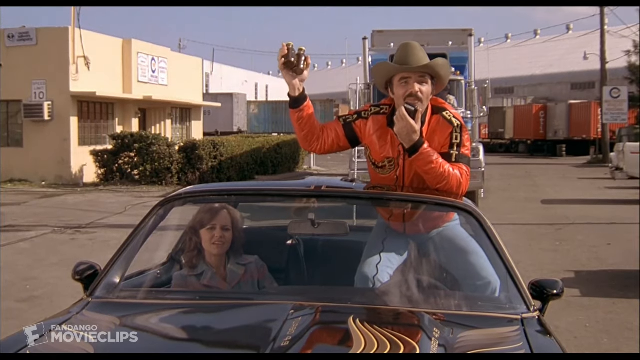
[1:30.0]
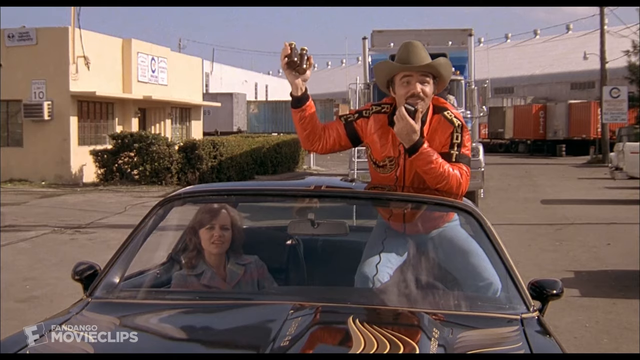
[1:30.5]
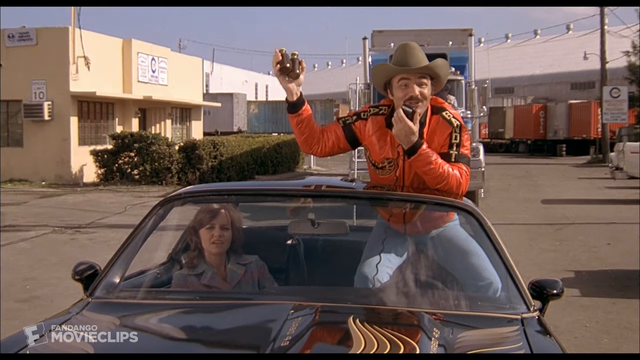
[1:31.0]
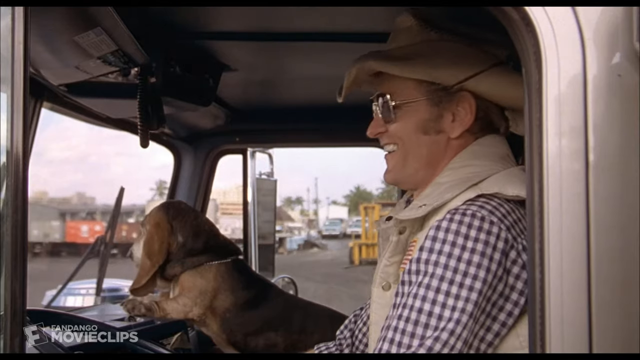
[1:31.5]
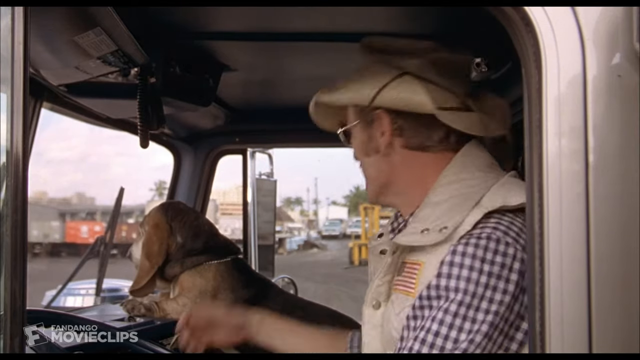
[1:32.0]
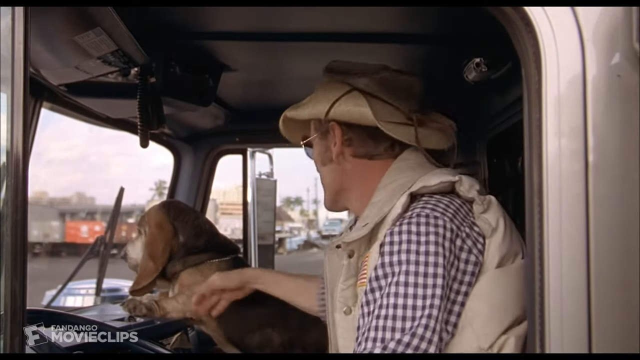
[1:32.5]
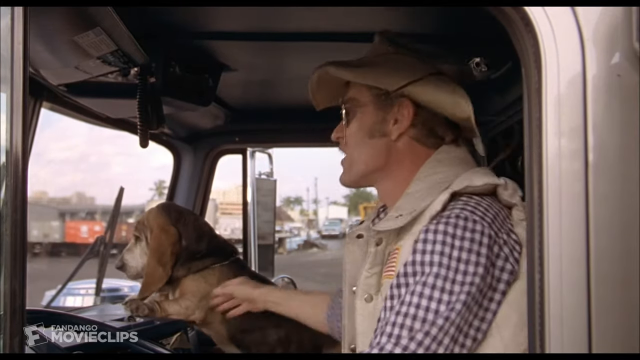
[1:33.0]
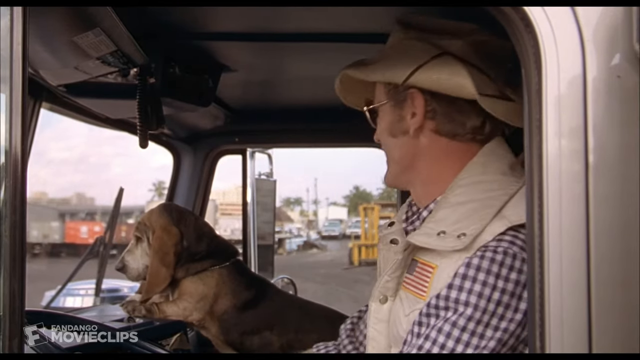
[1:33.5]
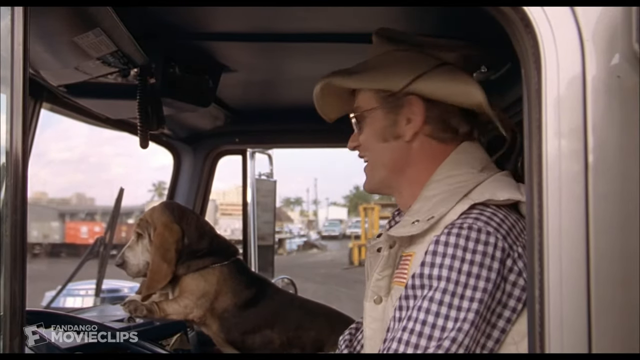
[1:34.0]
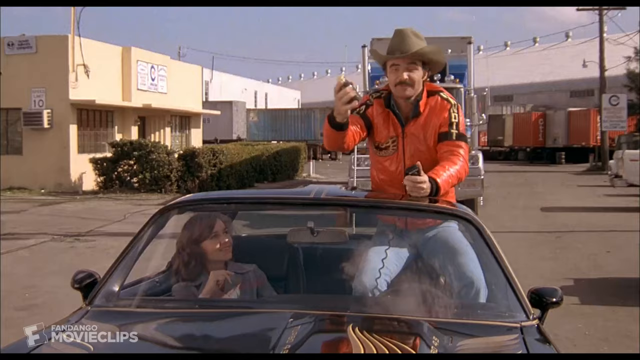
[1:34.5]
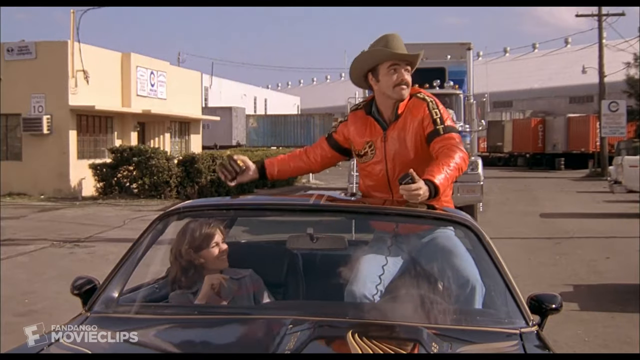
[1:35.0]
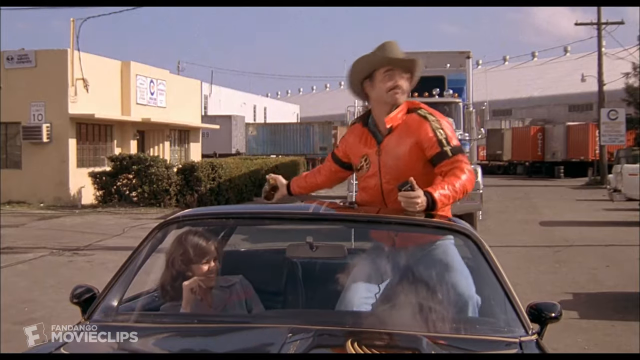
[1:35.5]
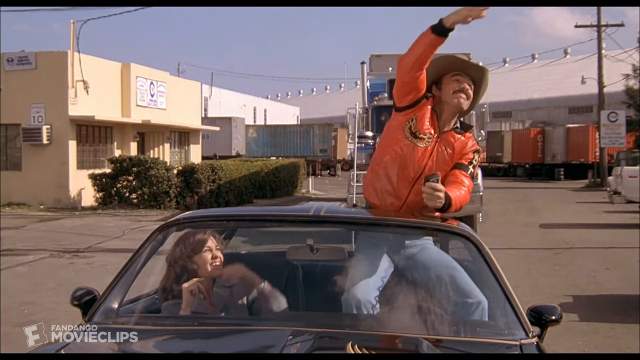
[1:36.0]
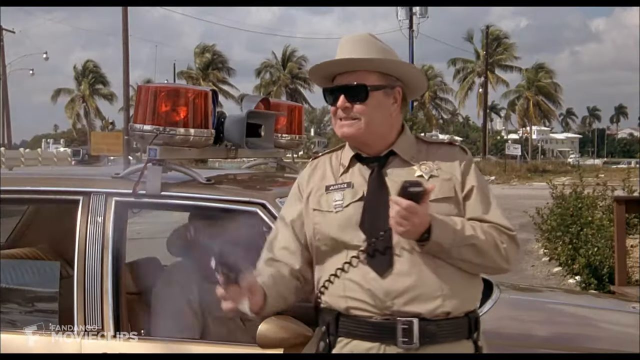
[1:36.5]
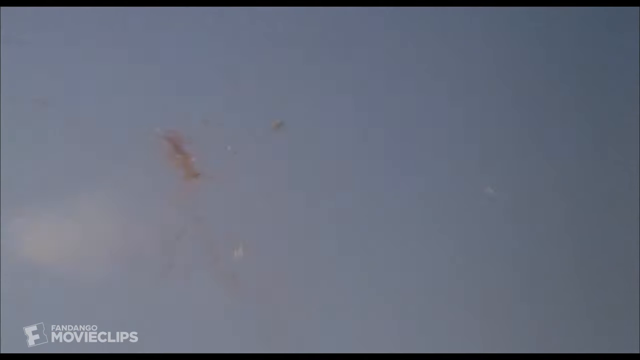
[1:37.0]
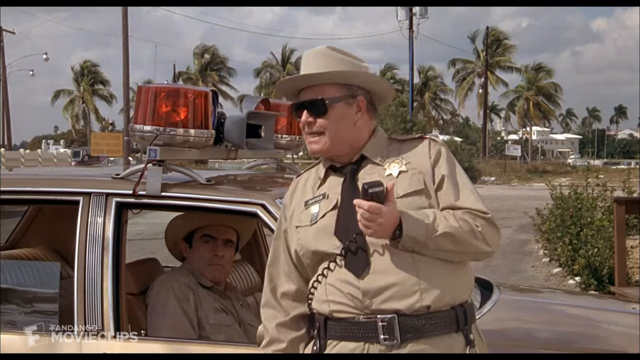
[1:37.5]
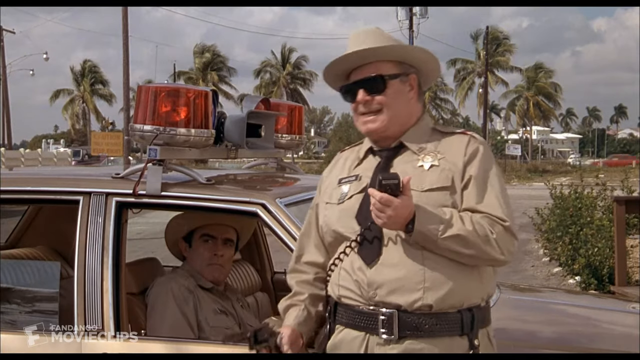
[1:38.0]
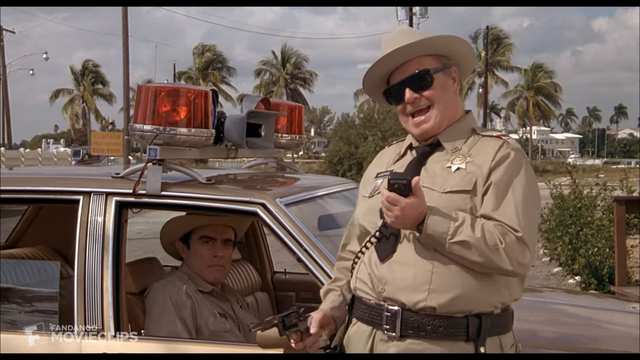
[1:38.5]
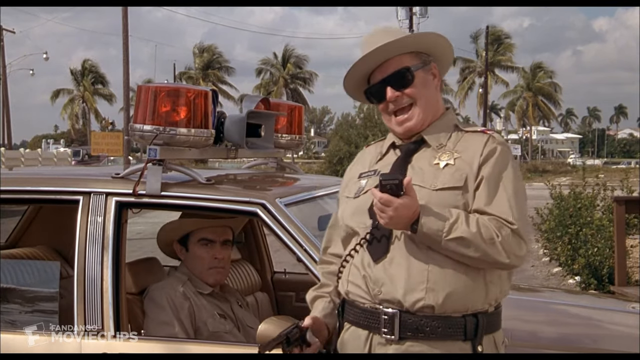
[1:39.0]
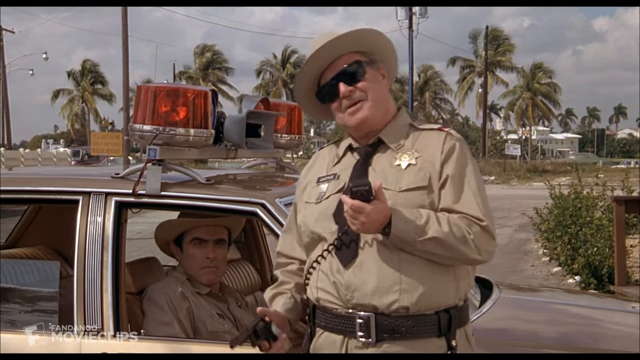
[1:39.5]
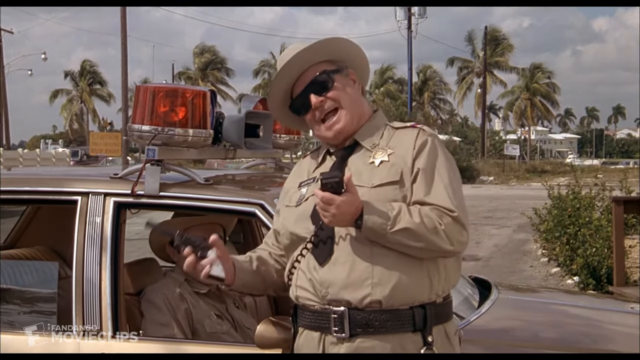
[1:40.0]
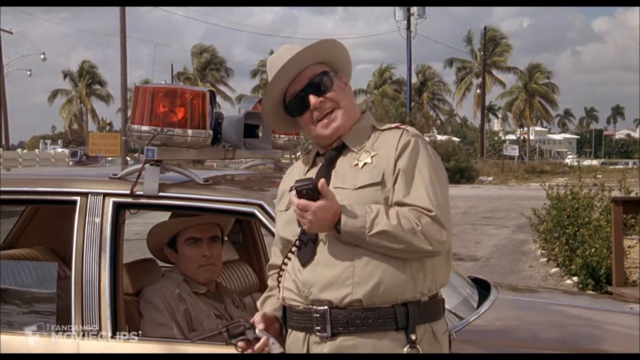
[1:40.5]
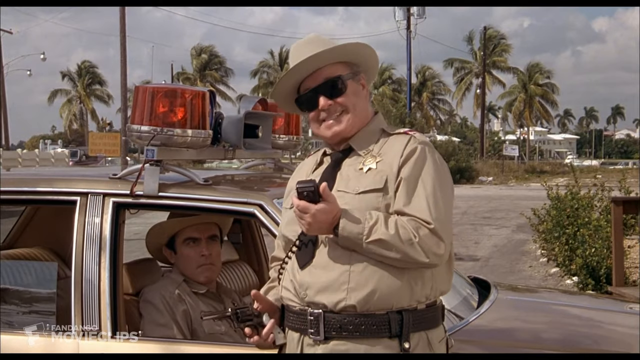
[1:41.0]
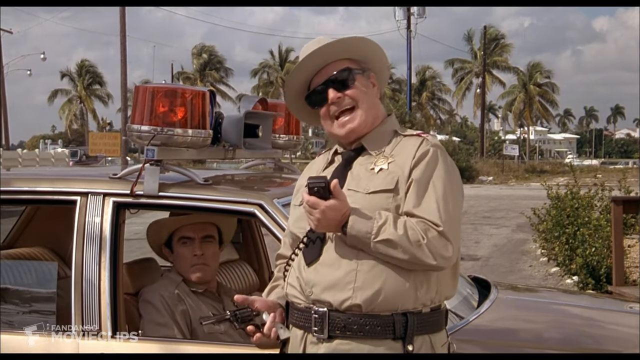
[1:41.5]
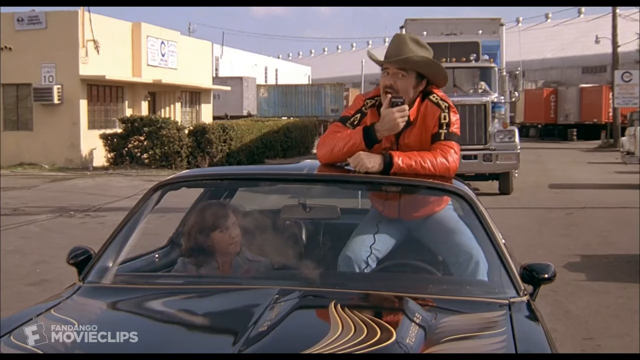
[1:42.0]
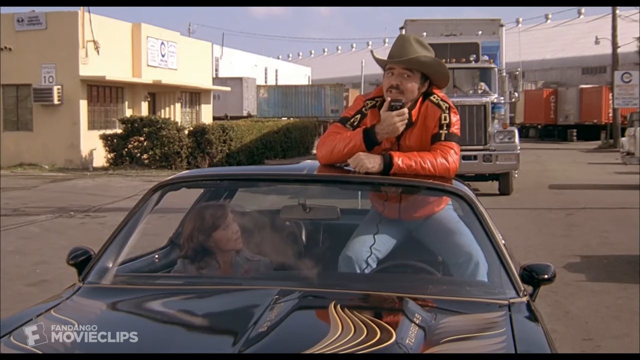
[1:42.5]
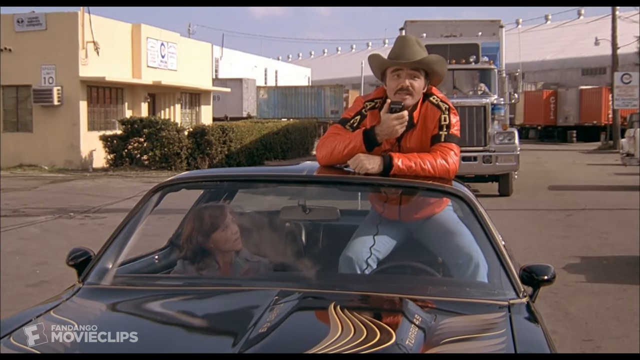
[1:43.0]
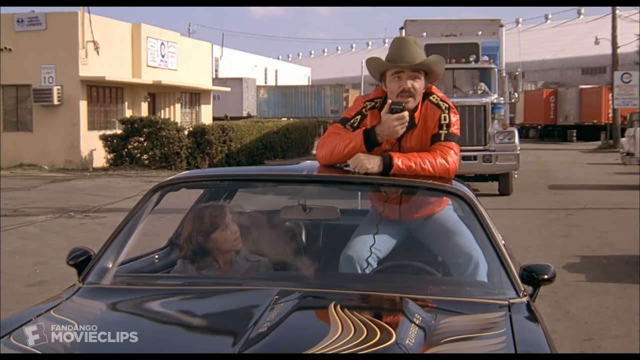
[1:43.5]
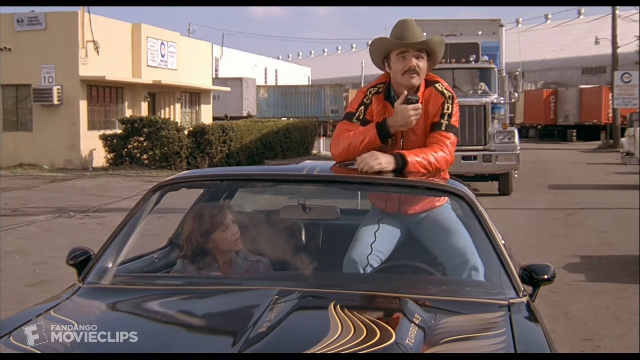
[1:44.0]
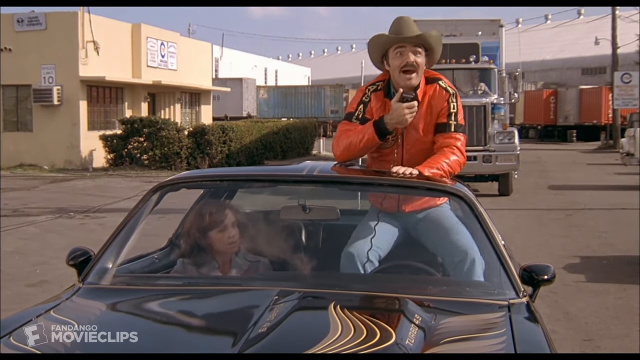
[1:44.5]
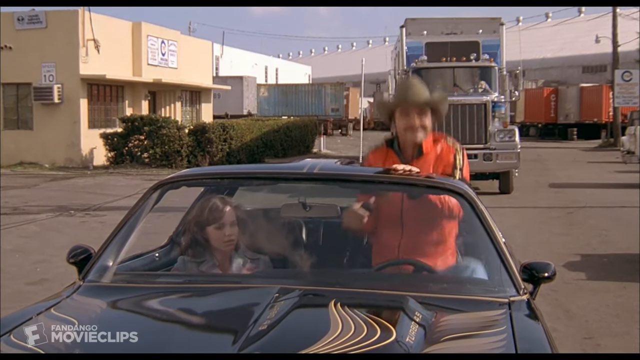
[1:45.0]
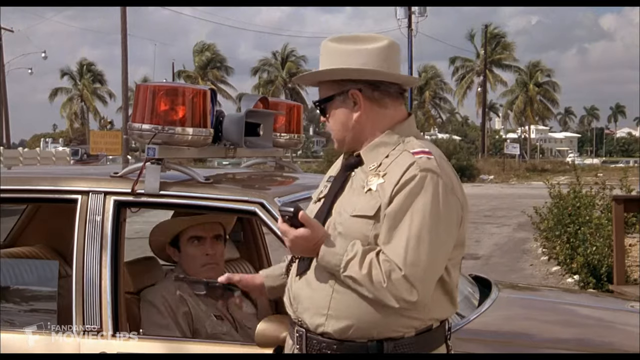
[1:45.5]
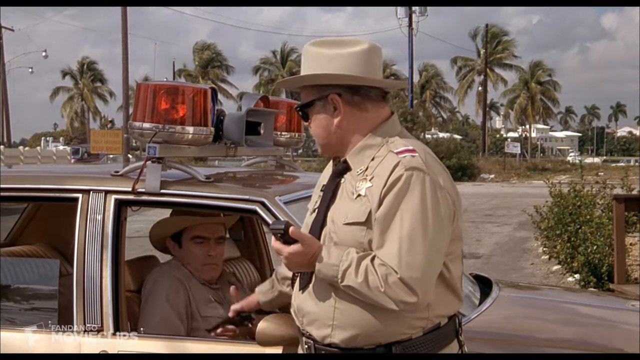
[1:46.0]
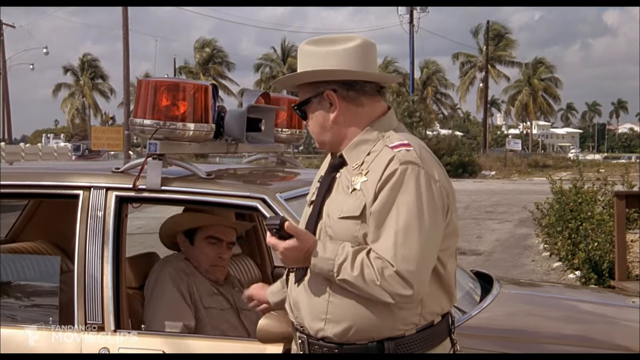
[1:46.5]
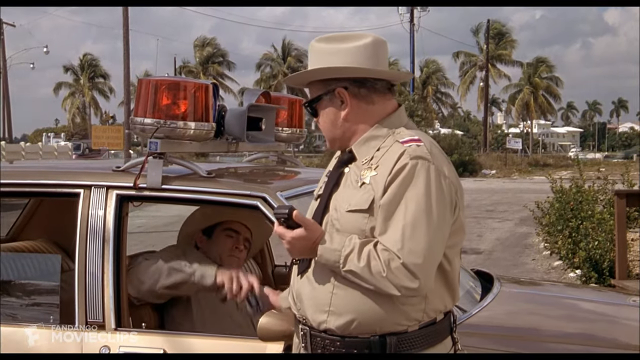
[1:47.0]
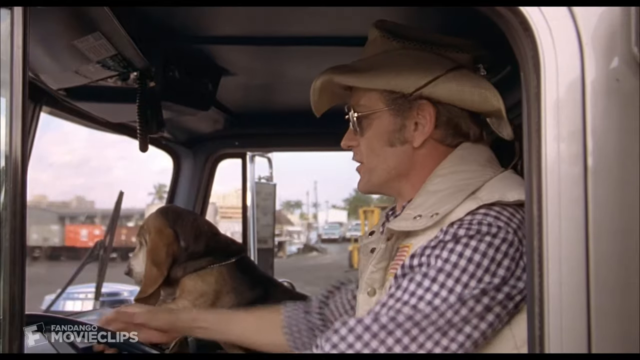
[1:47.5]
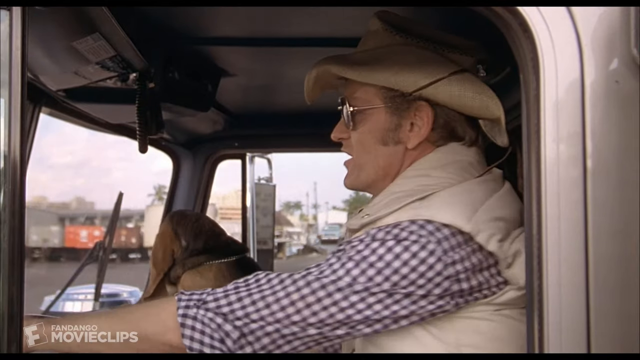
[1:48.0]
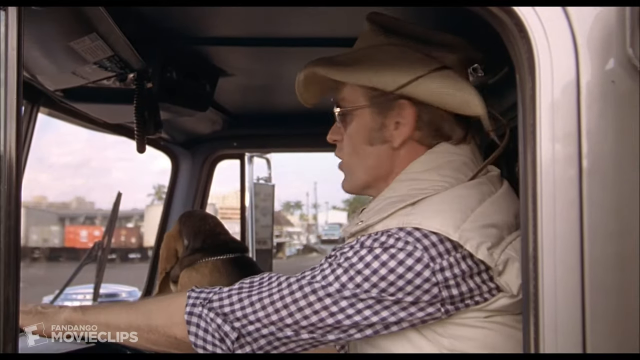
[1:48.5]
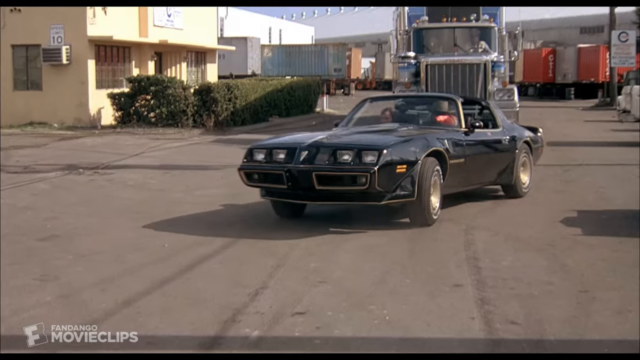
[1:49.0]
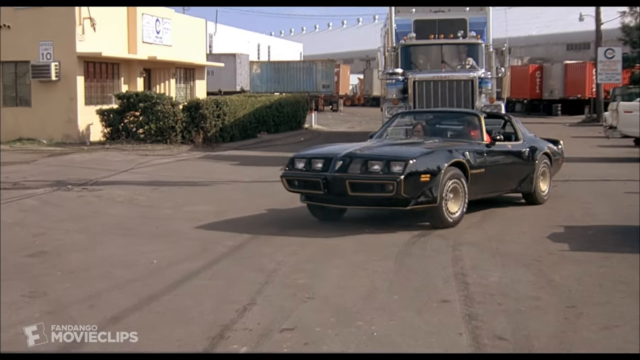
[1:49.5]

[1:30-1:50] The man across the street holds something in his hands. The view then shows the inside of the truck seen earlier: a dog sits on the lap of a man with a hat and dark glasses. The man throws a glass he was holding up into the air, and the policeman quickly hits it with a shot. The man on the truck starts to move, apparently about to start the truck. The man gets out of the car and sits in it again, then makes a U-turn; it looks like he is about to make an emergency escape near the policeman, who keeps hitting every shot.